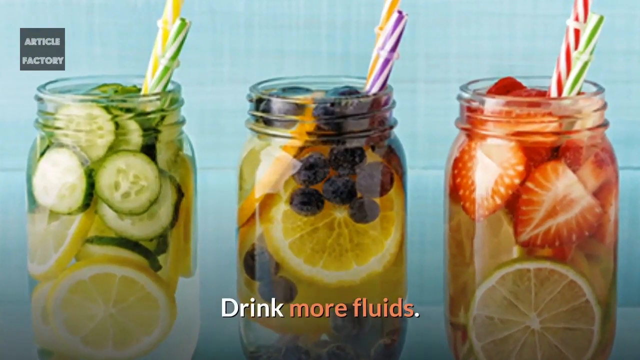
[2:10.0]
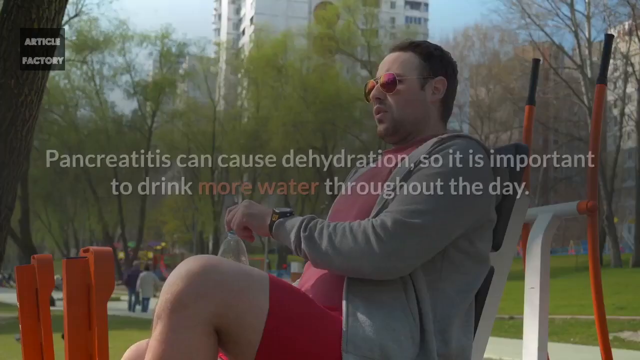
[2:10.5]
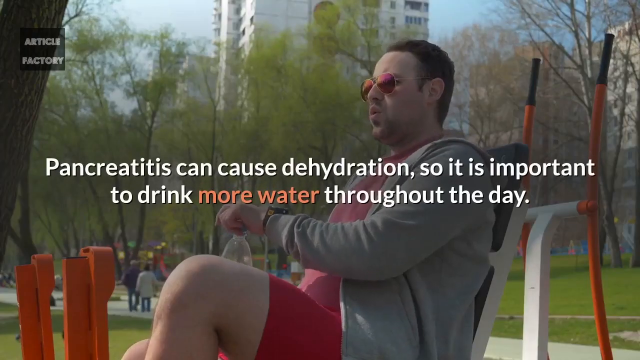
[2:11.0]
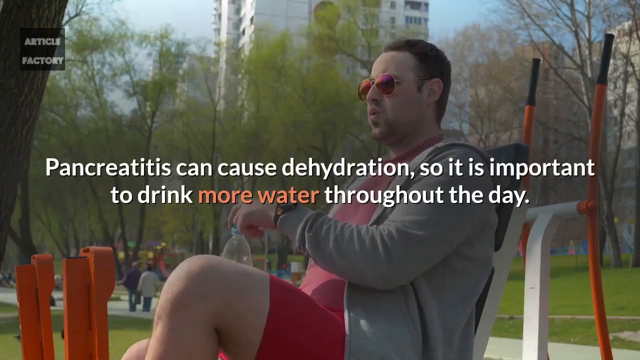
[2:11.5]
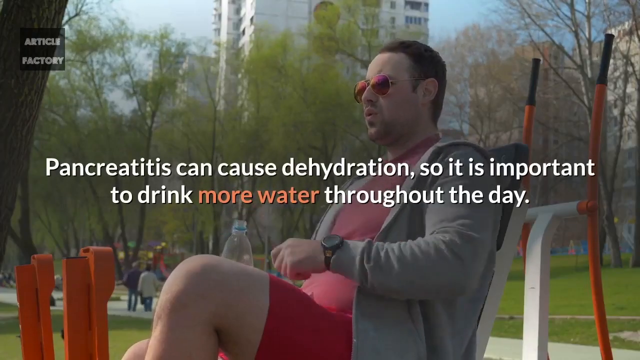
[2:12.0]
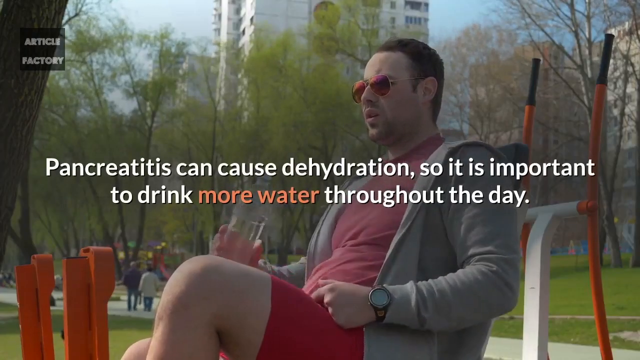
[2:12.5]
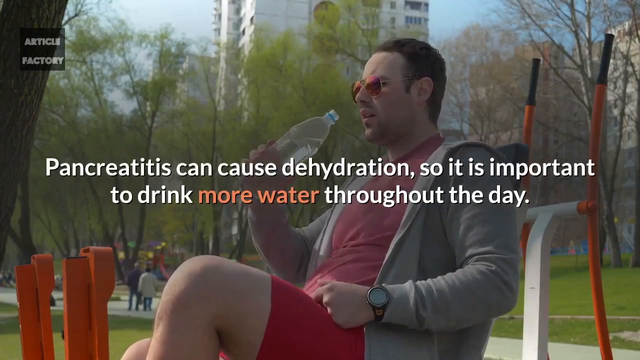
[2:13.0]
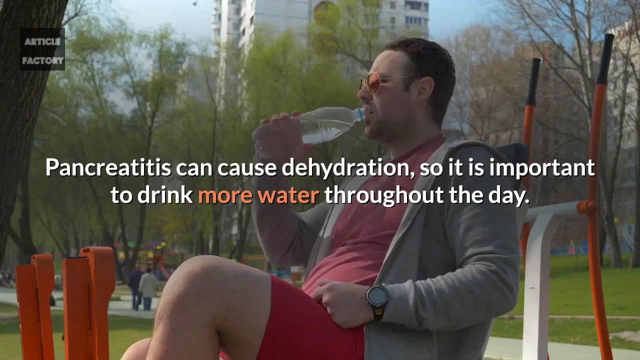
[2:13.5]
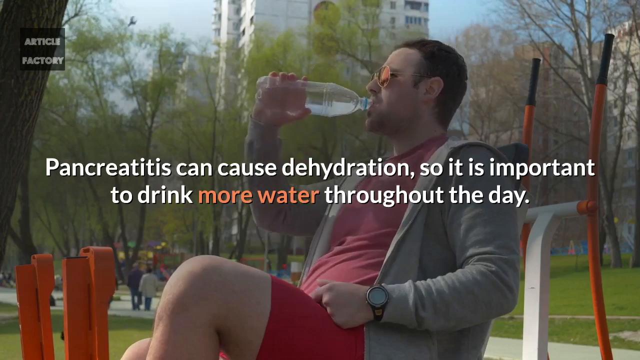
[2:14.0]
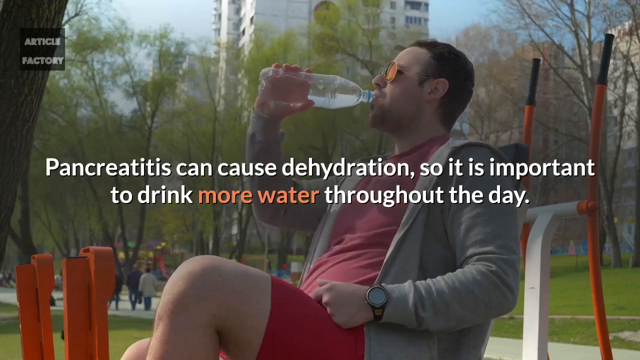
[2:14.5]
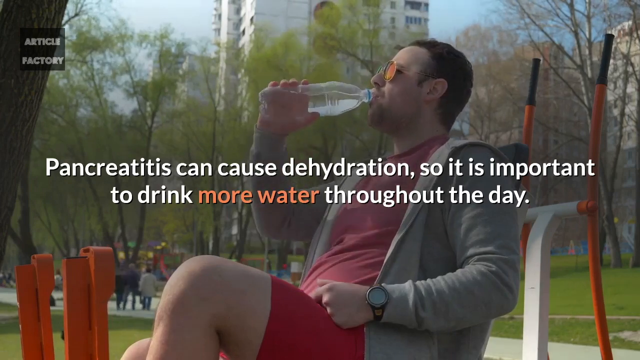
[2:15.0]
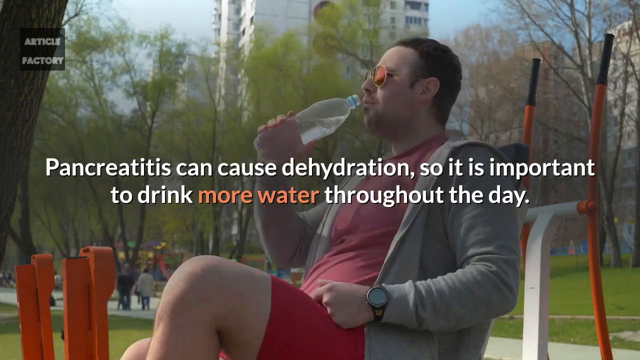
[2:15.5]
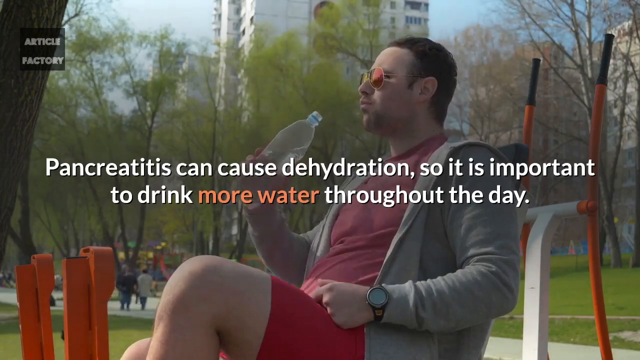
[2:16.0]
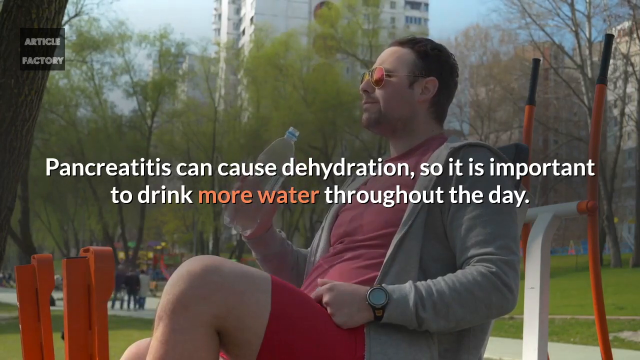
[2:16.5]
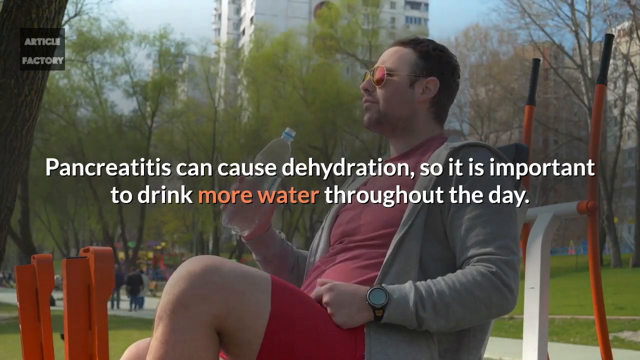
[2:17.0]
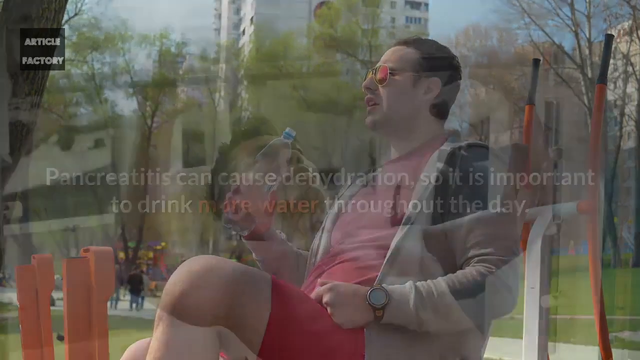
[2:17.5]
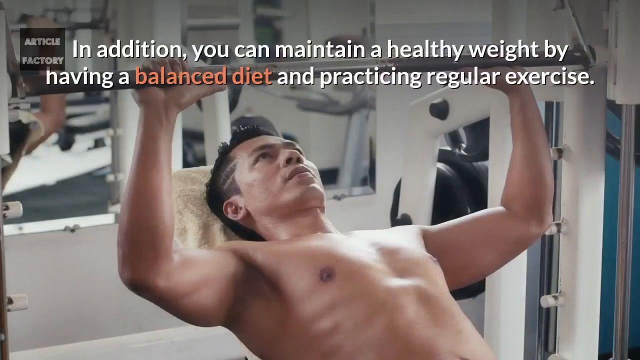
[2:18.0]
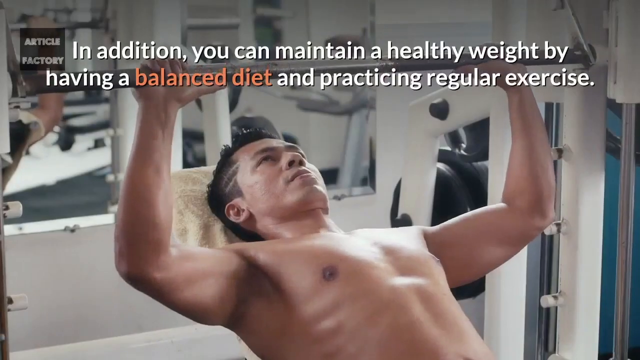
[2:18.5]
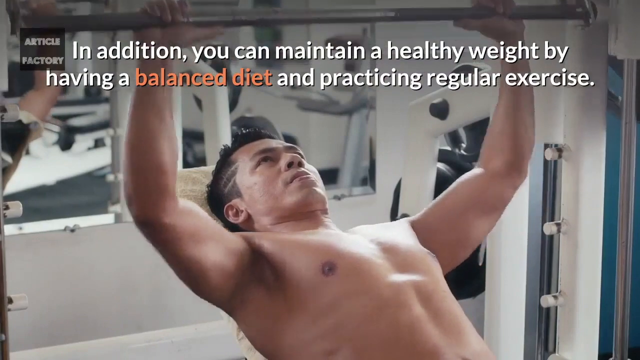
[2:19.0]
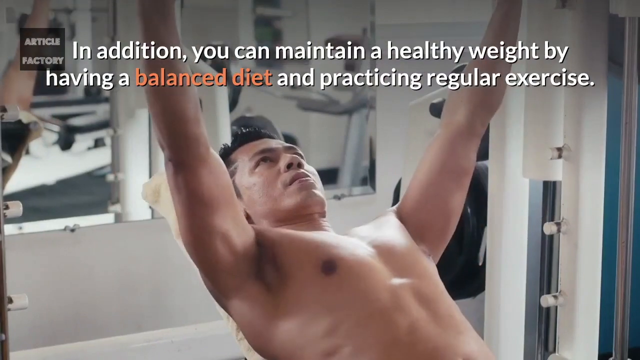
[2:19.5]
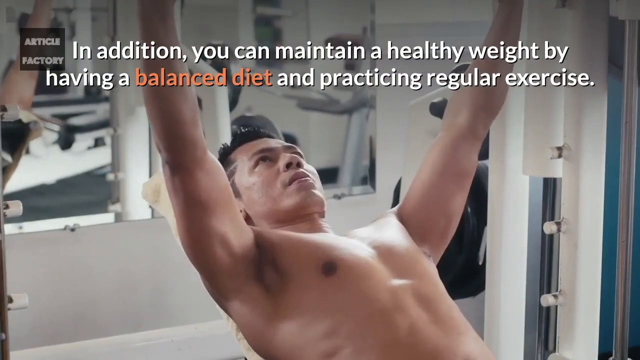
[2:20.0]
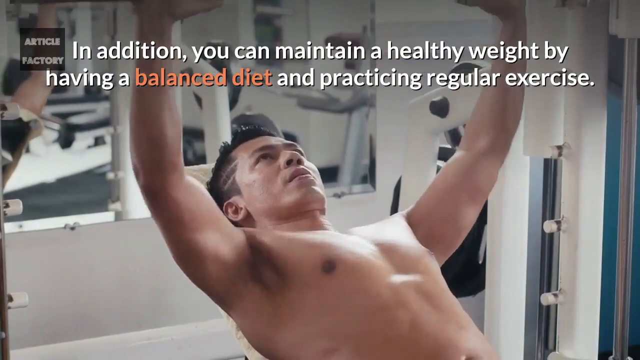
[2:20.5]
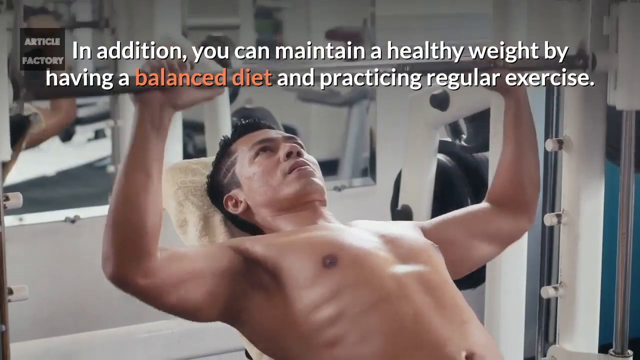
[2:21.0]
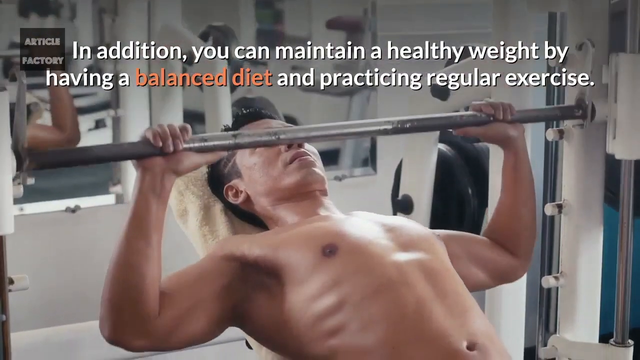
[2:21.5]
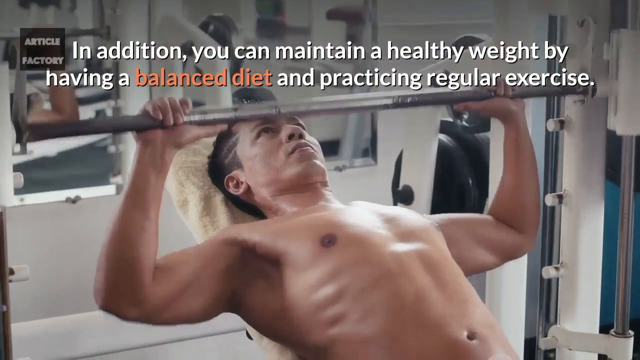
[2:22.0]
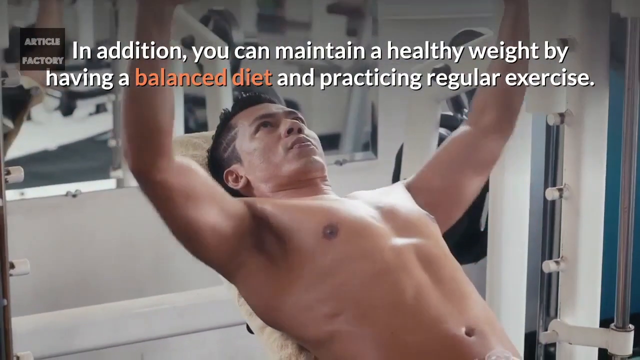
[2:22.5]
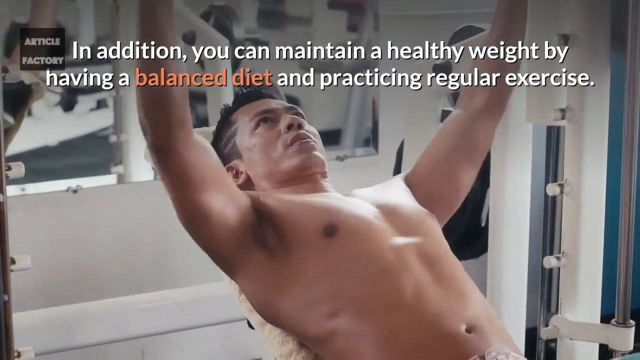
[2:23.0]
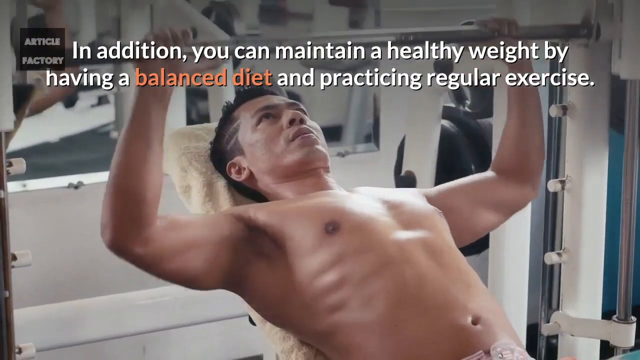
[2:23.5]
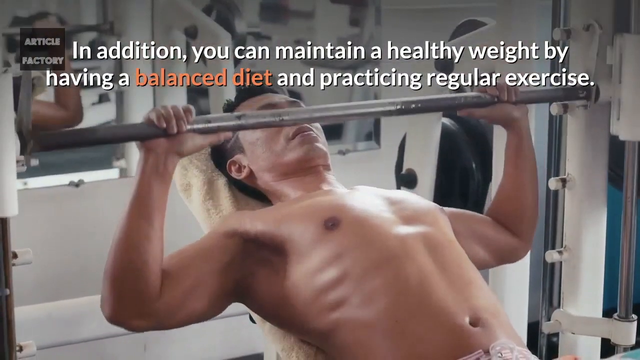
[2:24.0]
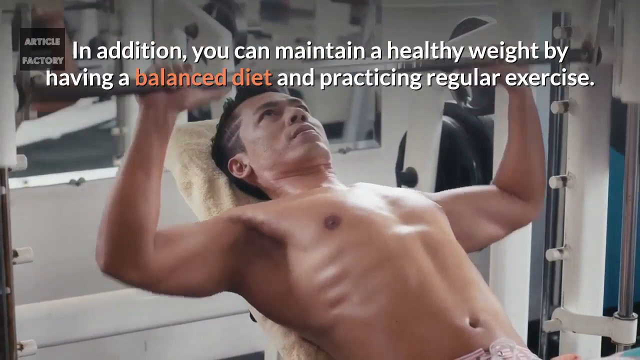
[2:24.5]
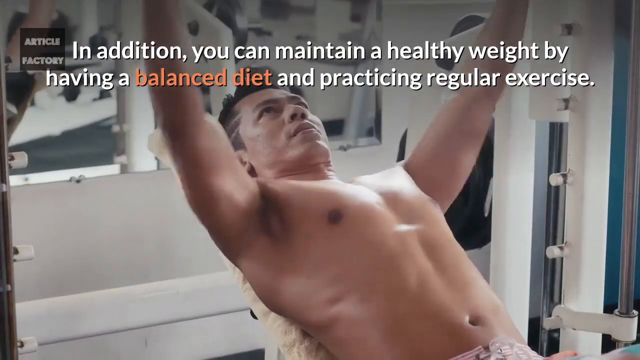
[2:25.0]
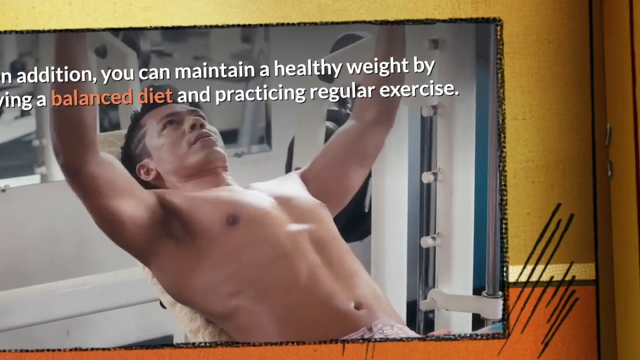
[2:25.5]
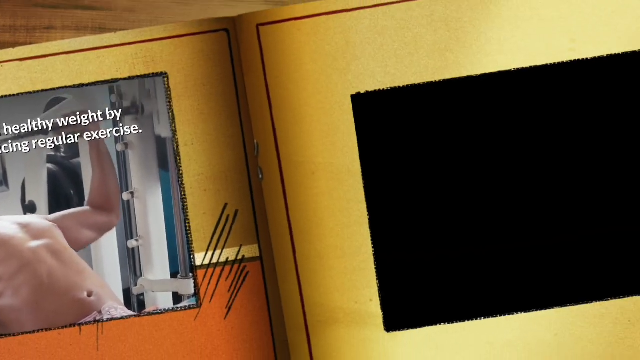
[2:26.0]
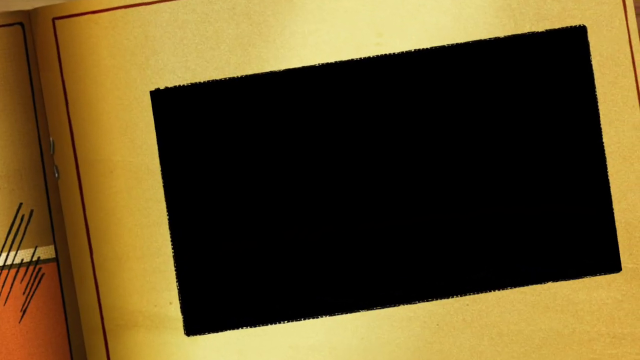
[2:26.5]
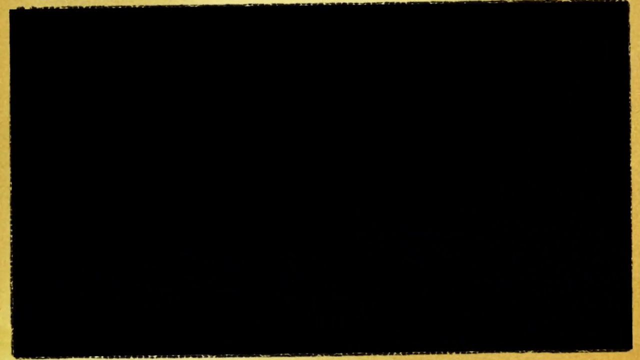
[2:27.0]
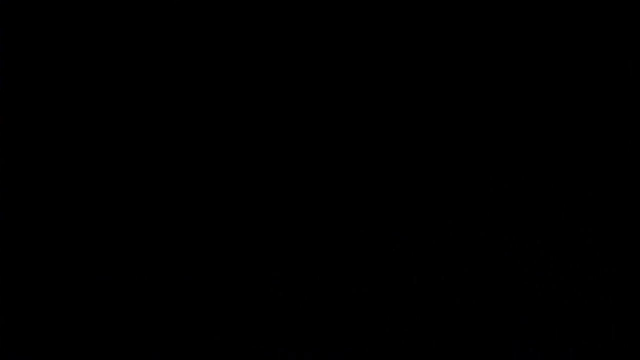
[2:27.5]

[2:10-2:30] Three fruit jars are shown, all filled to the top with liquid and a lot of fruit. All of them have lemon; some have cucumber slices, some have blueberries or blackberries, and the other has strawberries. The text reads "drink more fluids" against a light blue background that makes the colors of the jars stand out. Next, a man sits on a chair outside with the text "pancreatitis can cause dehydration, so it's important to drink more water throughout the day." He wears shades and a gray jacket, with trees and people behind him, and drinks water from a clear water bottle. Then the text reads "In addition, you can maintain a healthy weight by having a balanced diet and practicing regular exercise." The last part shows a black screen.